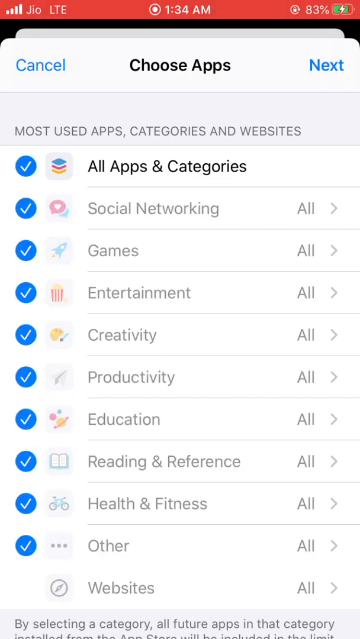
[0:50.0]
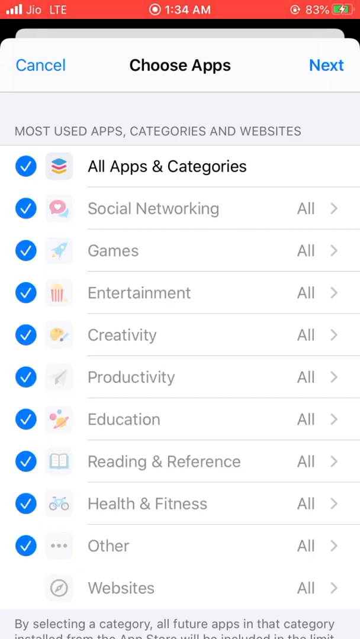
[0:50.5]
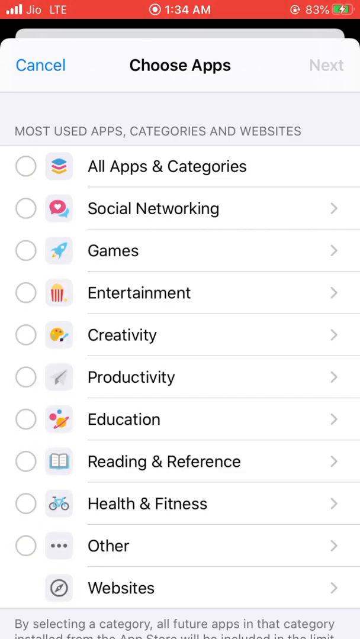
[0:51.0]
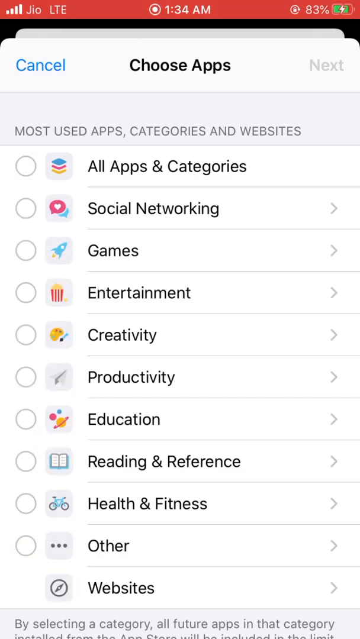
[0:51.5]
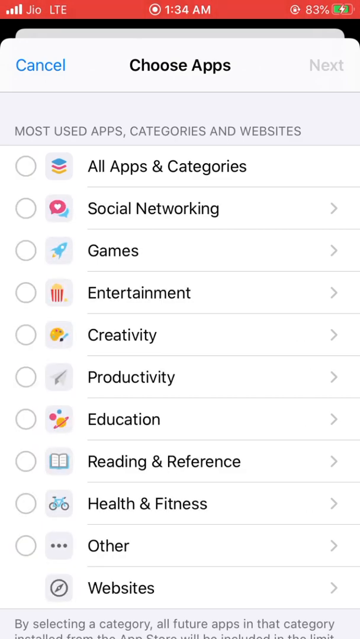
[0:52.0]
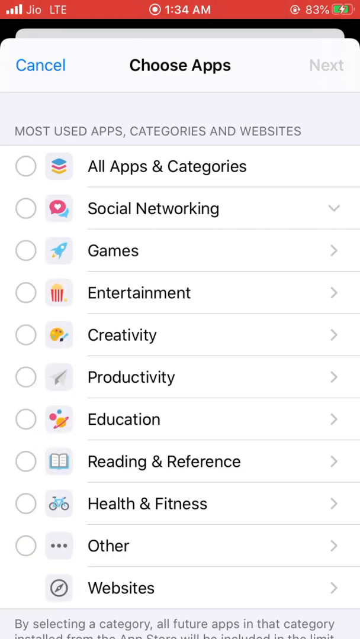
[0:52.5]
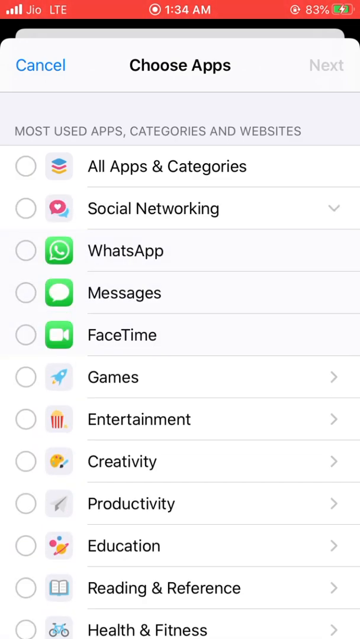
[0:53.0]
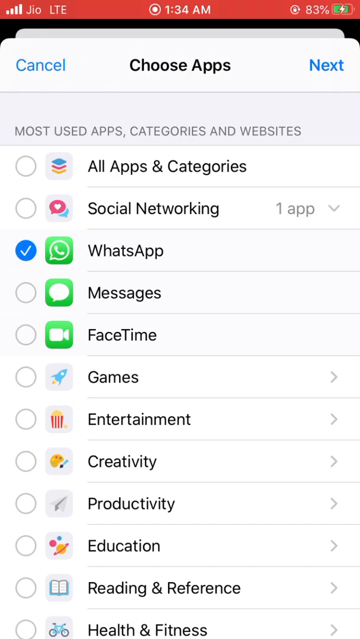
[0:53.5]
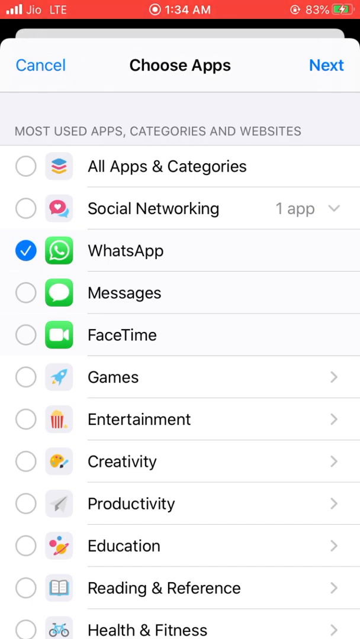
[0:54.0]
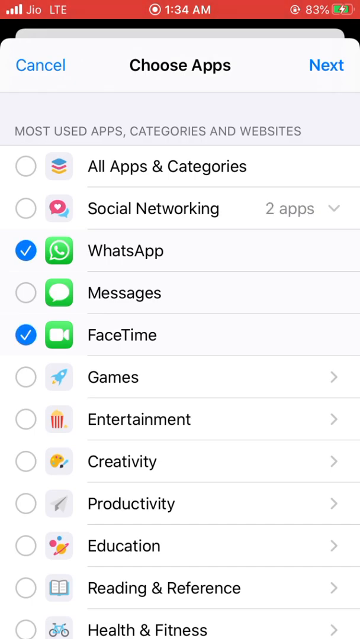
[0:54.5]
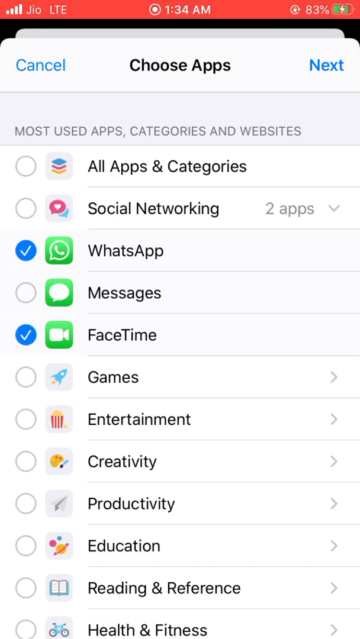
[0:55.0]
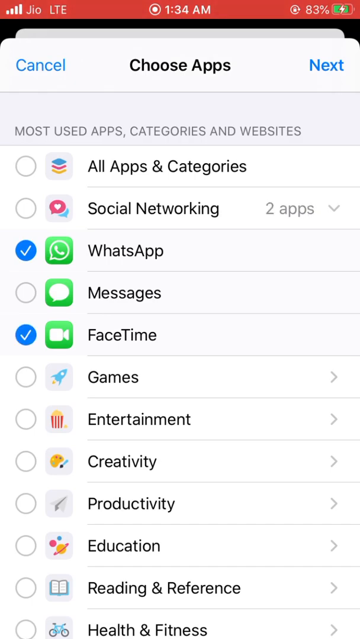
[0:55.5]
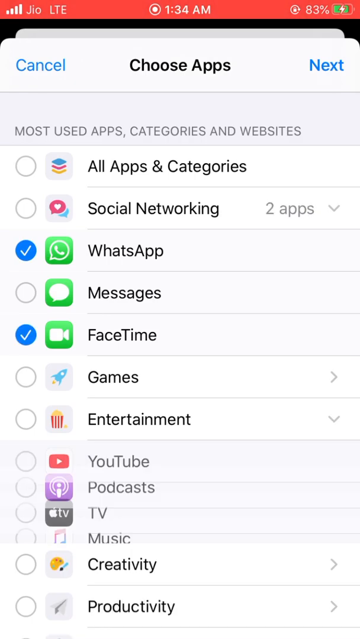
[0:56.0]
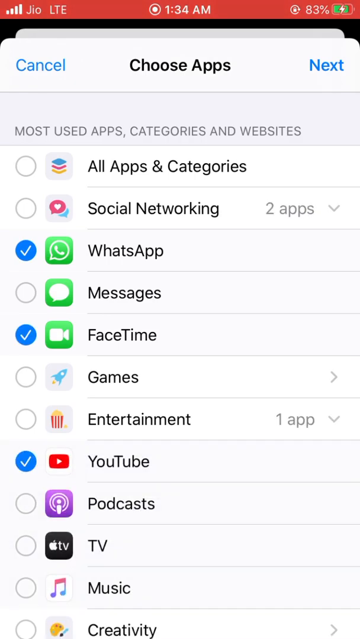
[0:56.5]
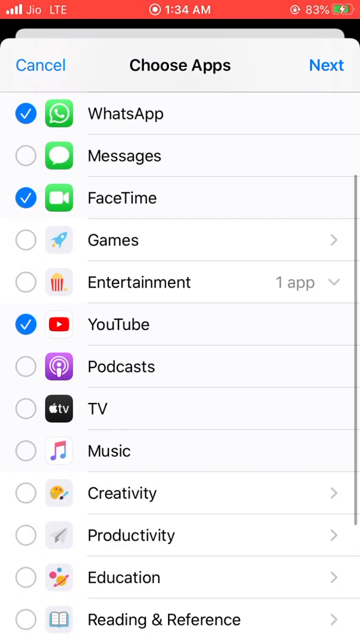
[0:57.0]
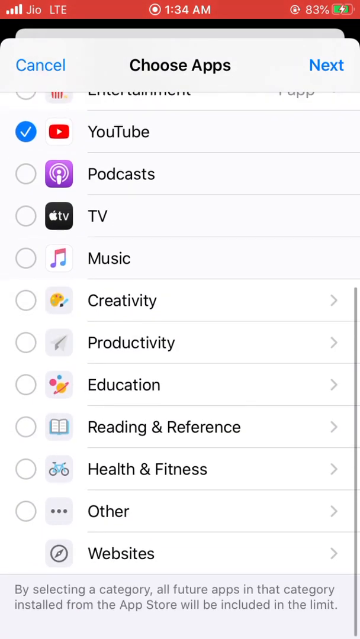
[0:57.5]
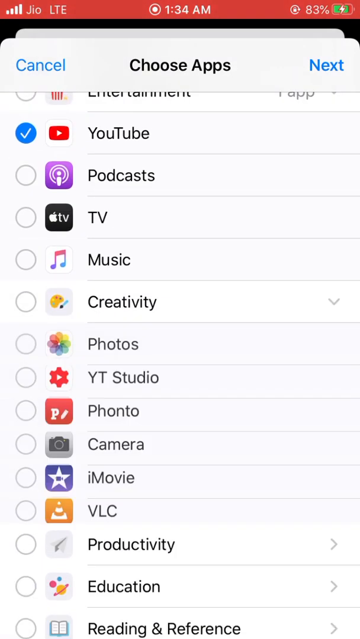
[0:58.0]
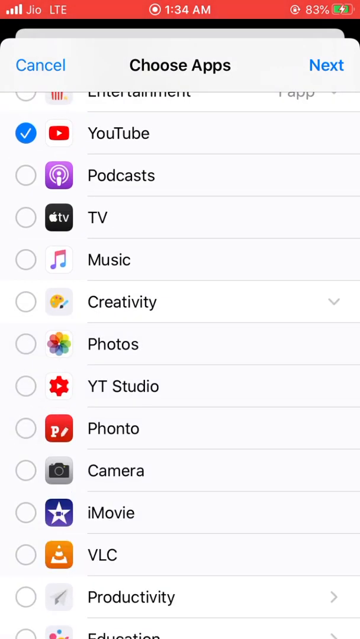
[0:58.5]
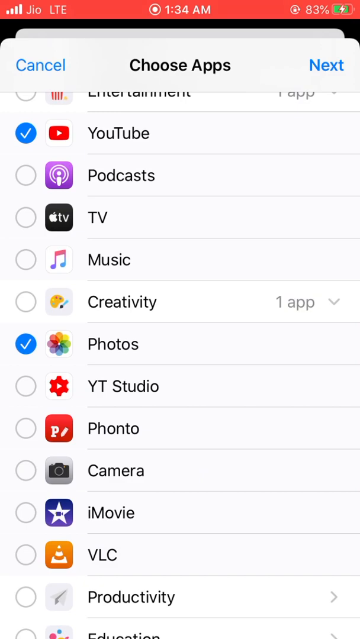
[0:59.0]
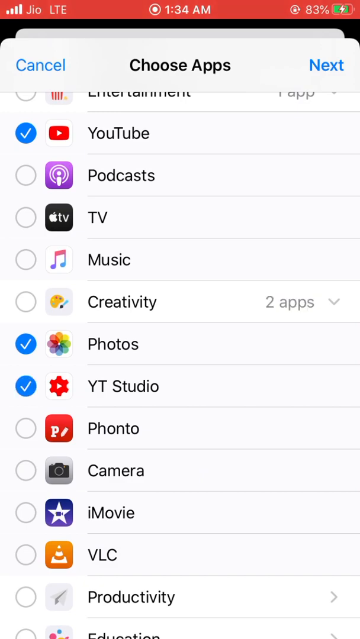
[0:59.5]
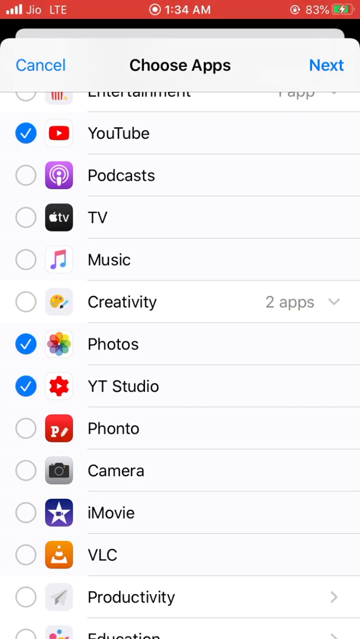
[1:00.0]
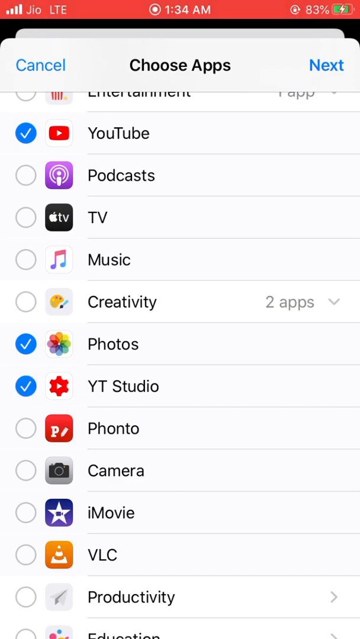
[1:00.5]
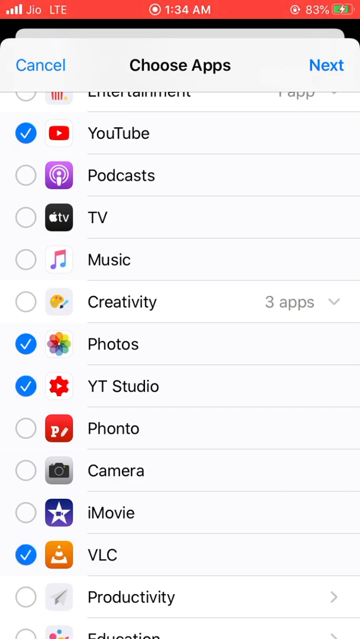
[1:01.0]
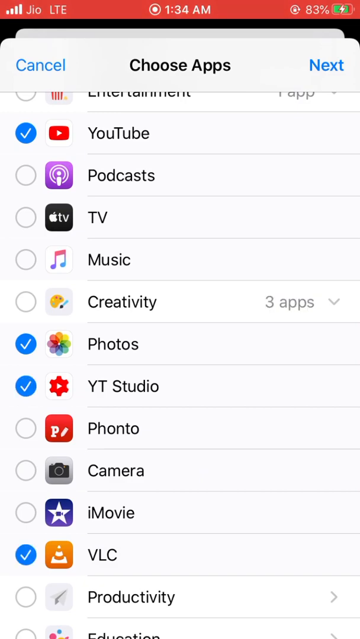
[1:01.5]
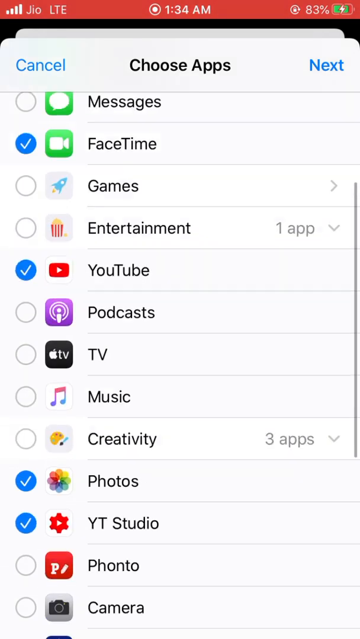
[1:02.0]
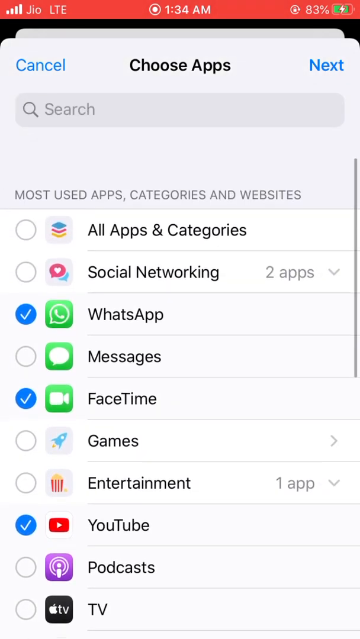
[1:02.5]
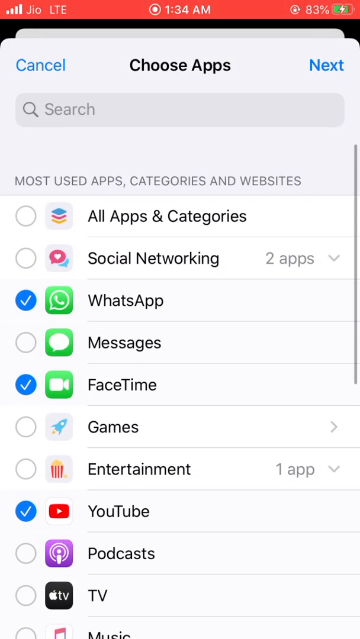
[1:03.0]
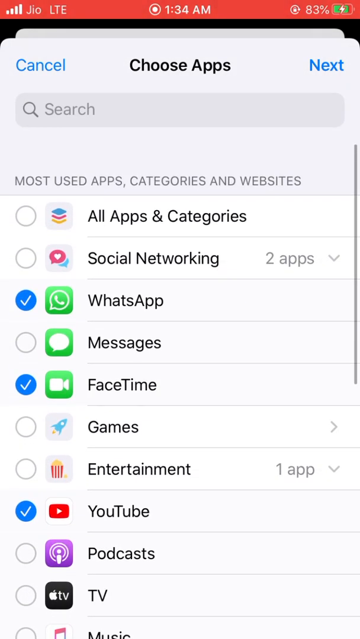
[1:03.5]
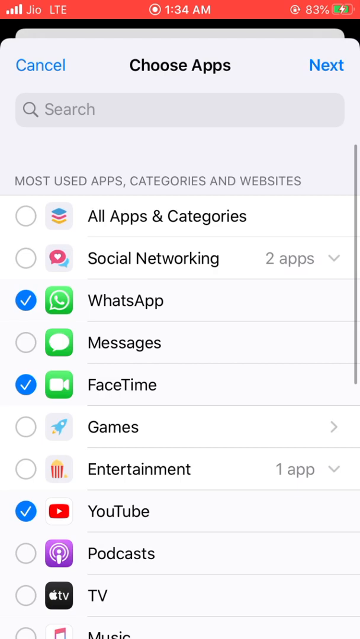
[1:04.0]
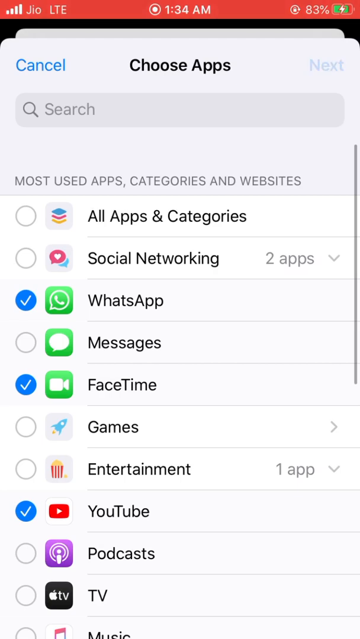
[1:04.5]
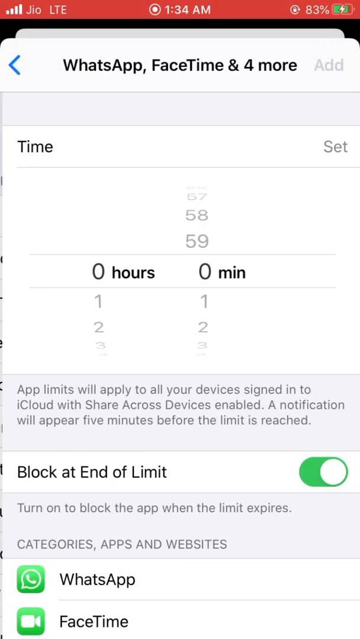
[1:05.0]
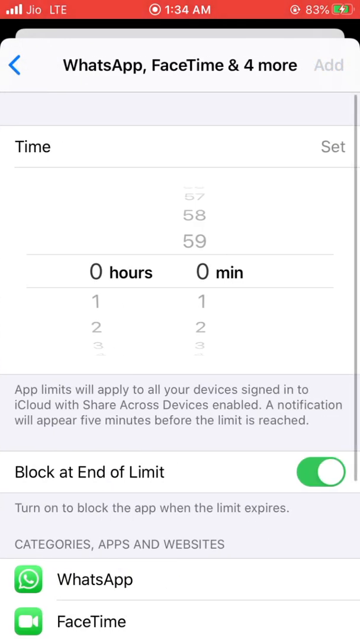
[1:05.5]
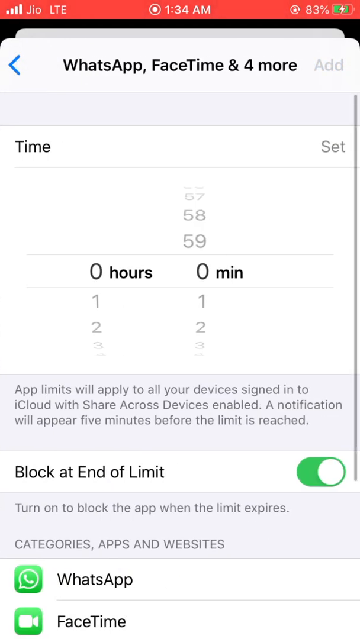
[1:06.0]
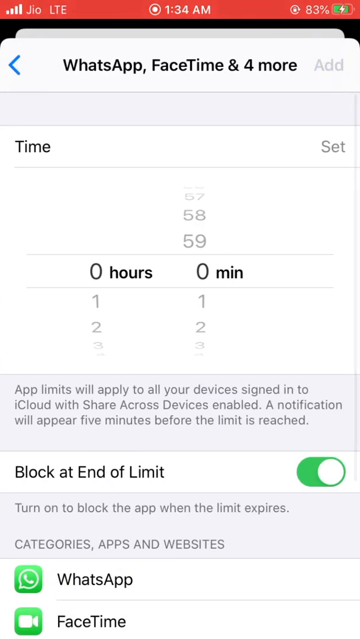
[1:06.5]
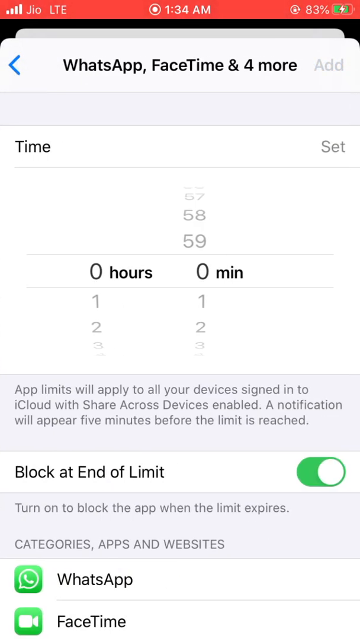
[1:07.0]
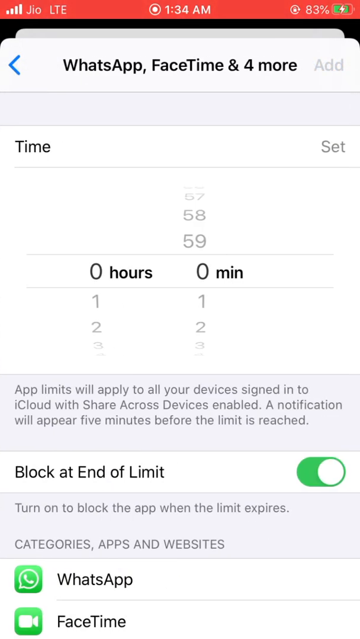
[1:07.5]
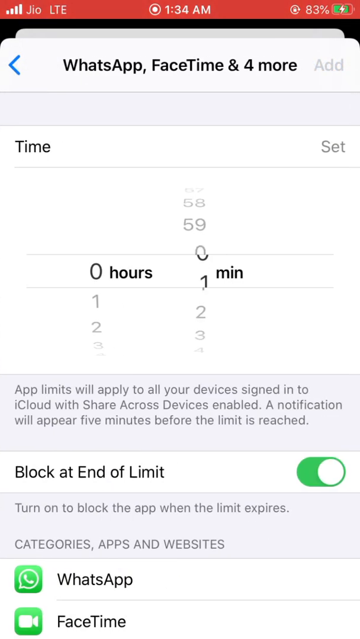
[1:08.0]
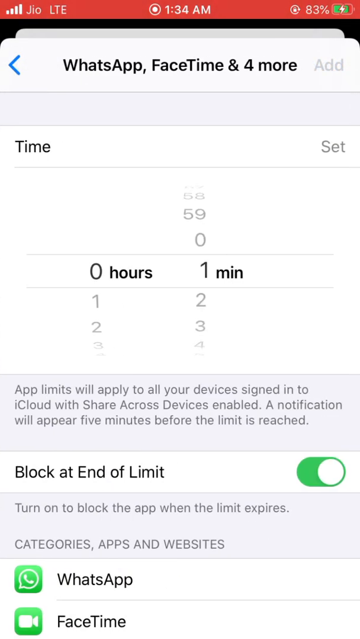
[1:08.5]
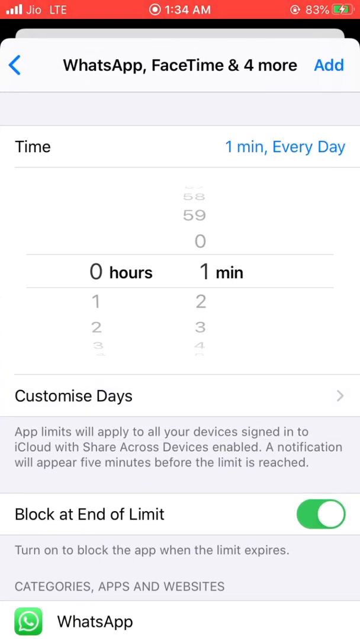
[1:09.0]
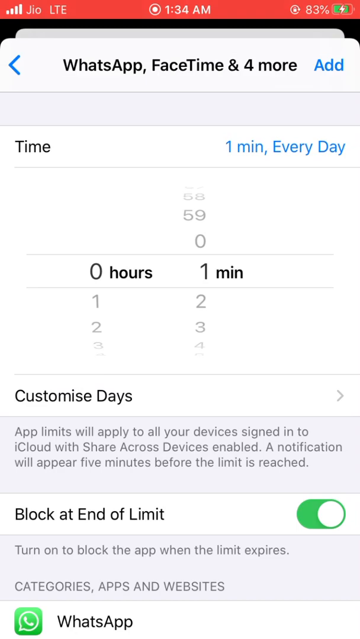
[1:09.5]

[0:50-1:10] The user unselects all the apps and scrolls through the list. They select WhatsApp, then FaceTime, which is two below WhatsApp, with Messages between them. They scroll down and select YouTube, then scroll all the way down and add Photos, YouTube Studio, and VLC. Scrolling back up, they seem to select WhatsApp and the other apps and seem to be choosing a setting for them. The time is set at zero hours and zero minutes, and the user moves it to one minute. When apps are selected, they sometimes come up on the list even though they were not on the screen, apparently through some sort of swipe; this happens with WhatsApp, YouTube, and some of the other selected apps.